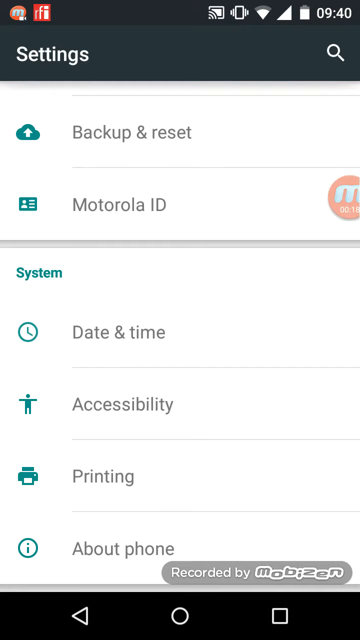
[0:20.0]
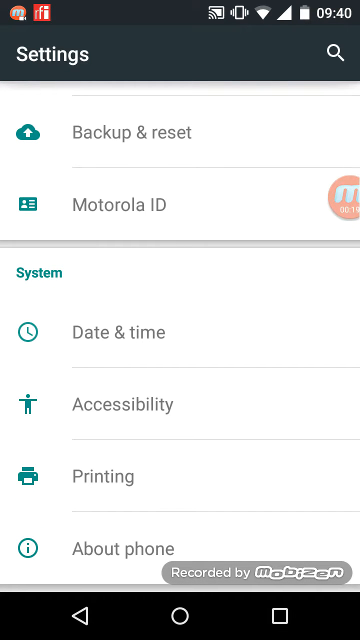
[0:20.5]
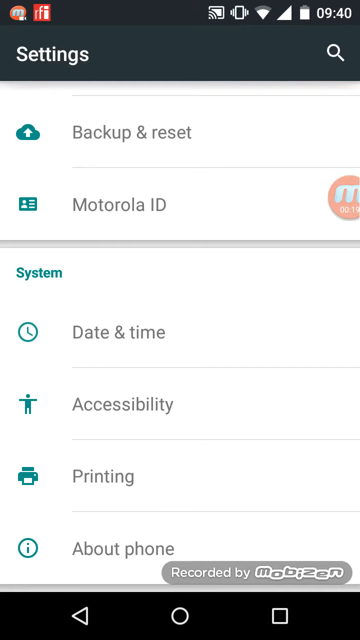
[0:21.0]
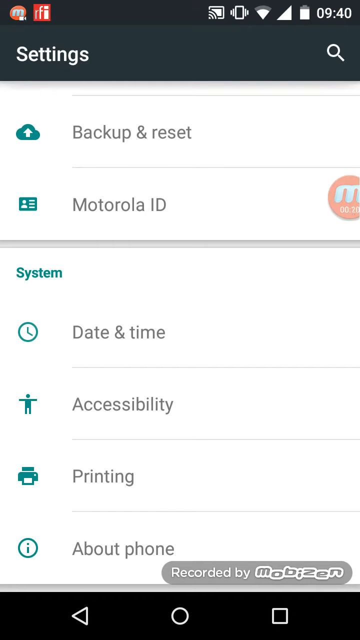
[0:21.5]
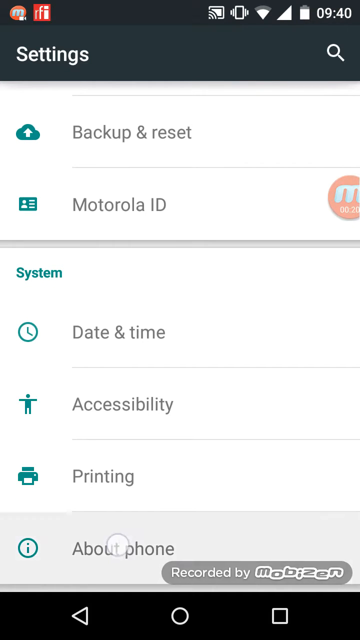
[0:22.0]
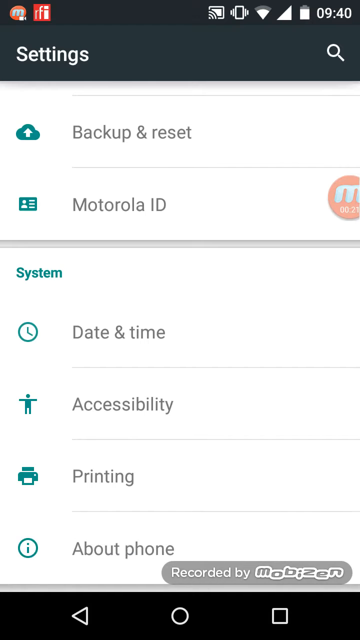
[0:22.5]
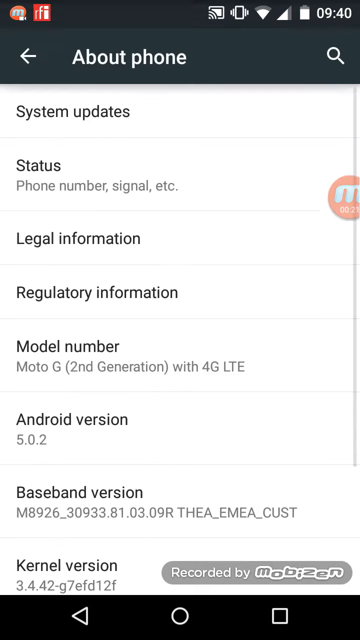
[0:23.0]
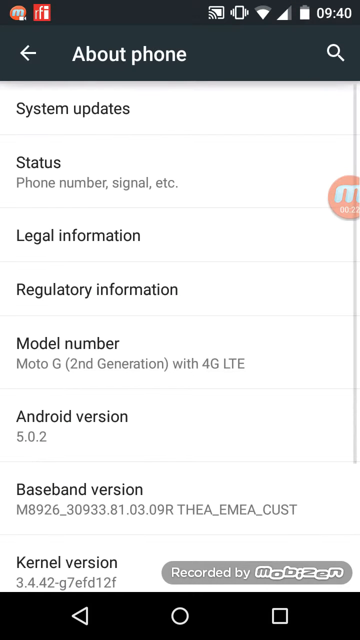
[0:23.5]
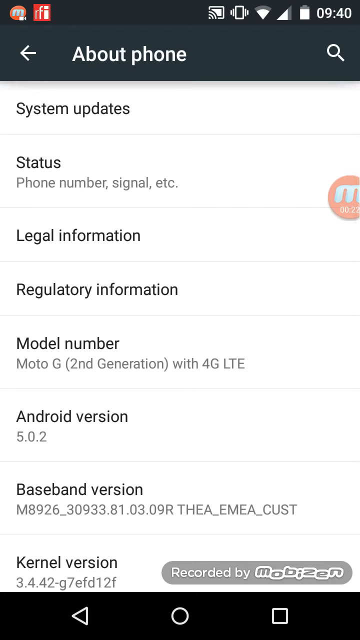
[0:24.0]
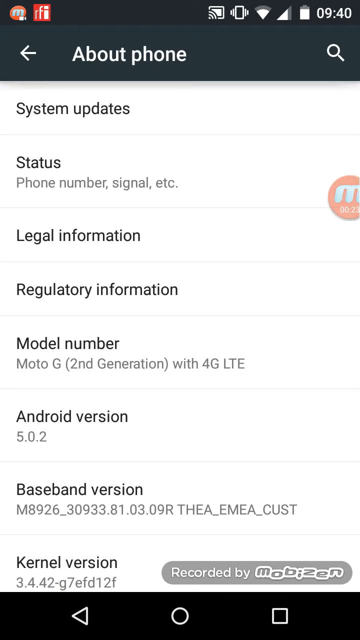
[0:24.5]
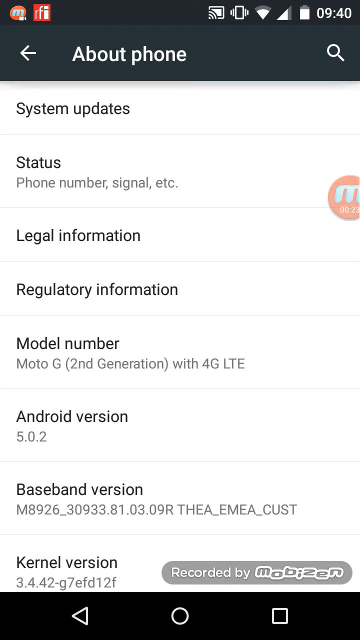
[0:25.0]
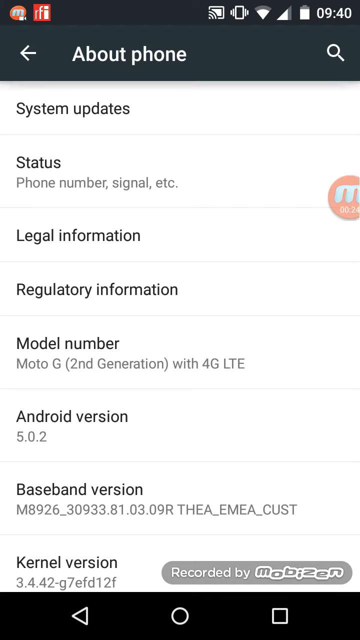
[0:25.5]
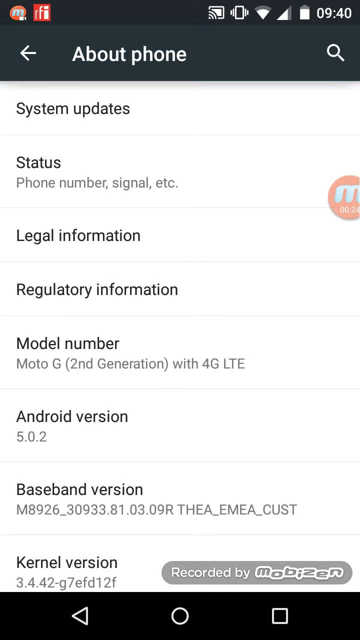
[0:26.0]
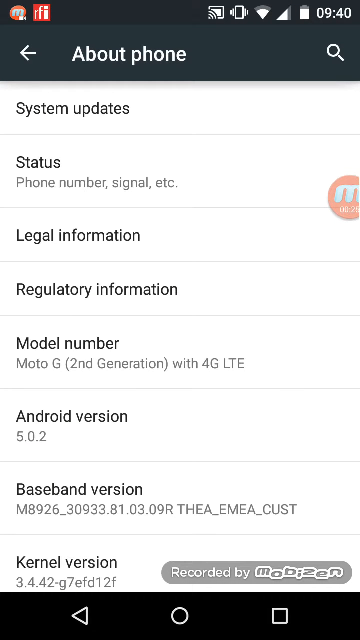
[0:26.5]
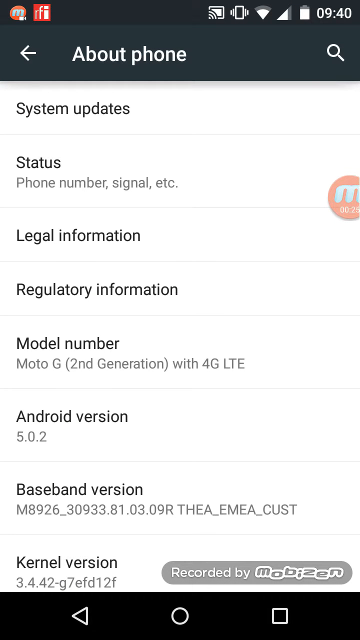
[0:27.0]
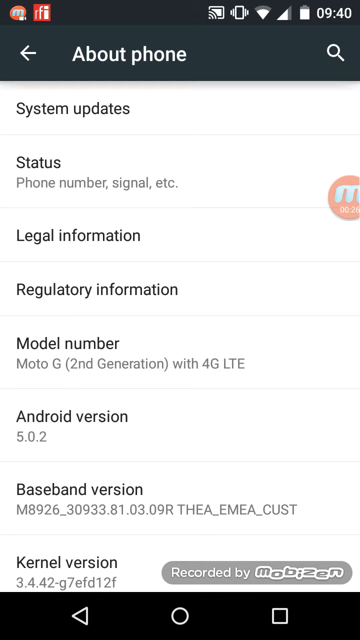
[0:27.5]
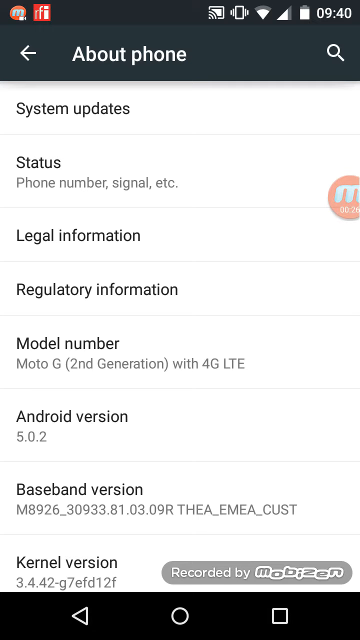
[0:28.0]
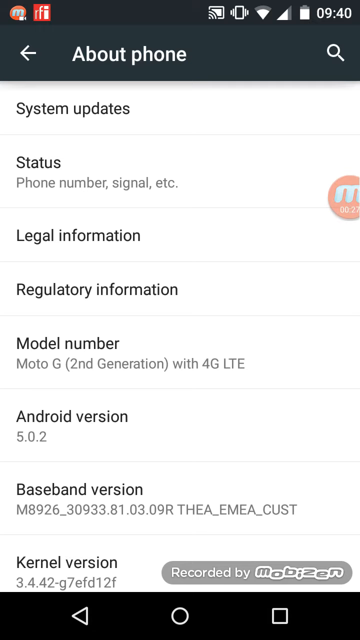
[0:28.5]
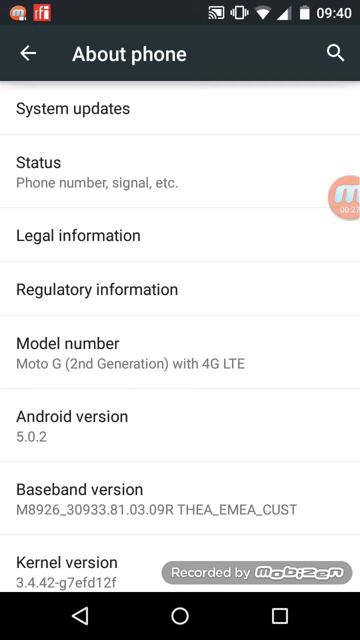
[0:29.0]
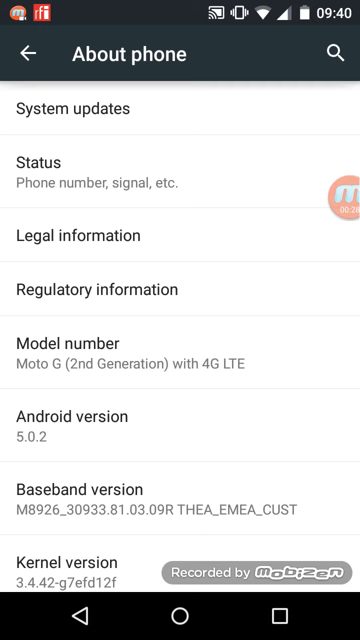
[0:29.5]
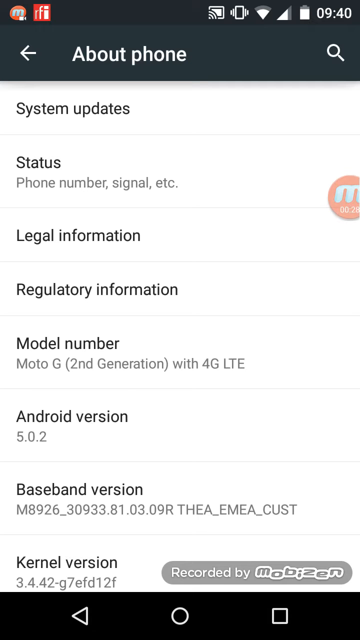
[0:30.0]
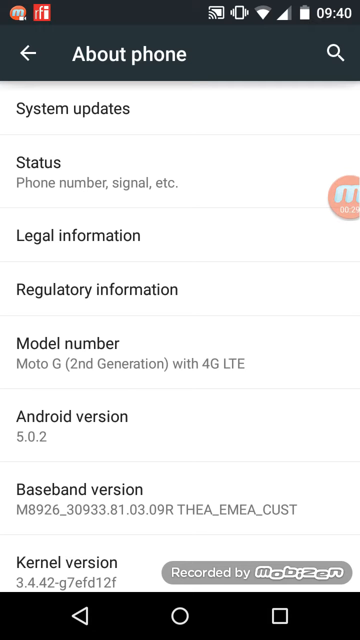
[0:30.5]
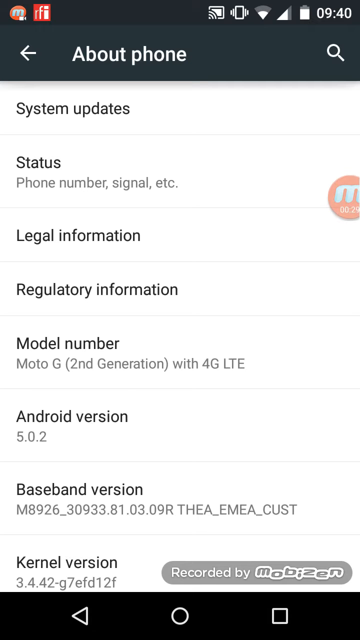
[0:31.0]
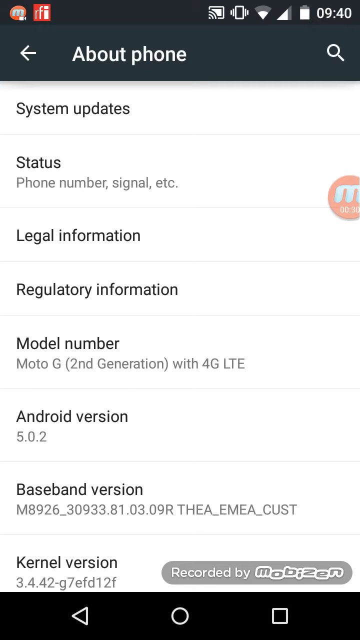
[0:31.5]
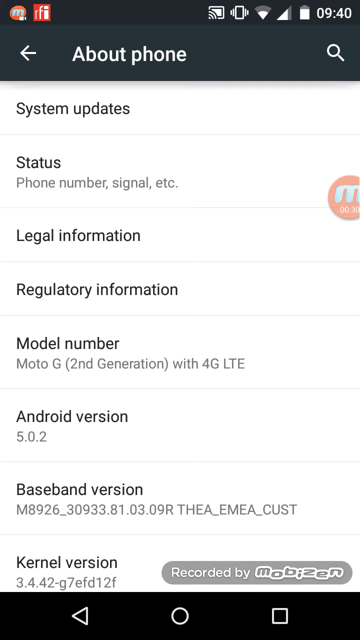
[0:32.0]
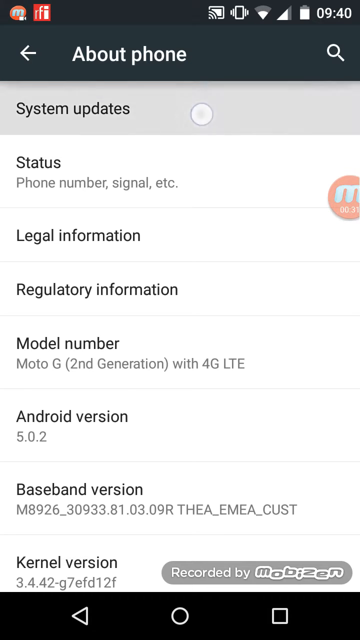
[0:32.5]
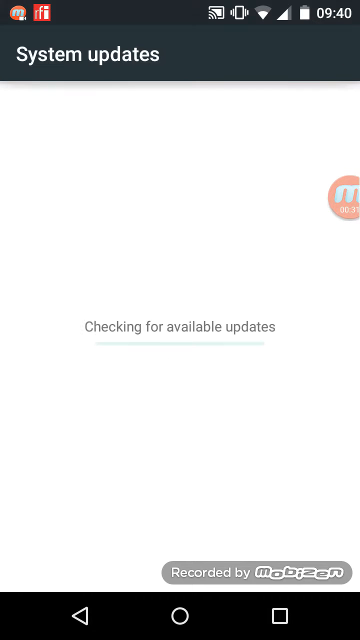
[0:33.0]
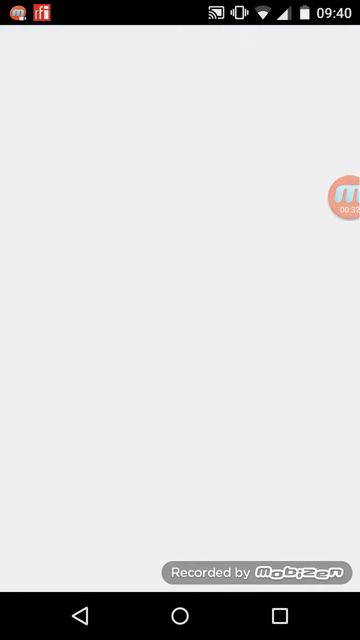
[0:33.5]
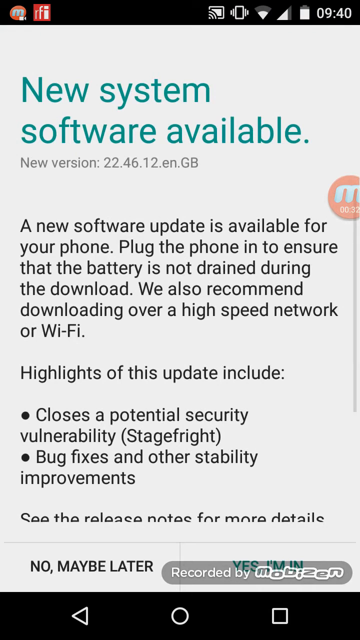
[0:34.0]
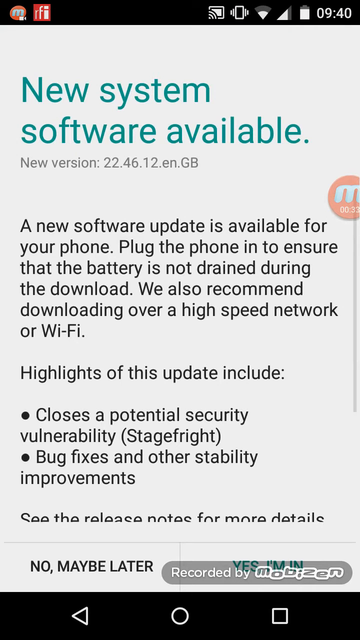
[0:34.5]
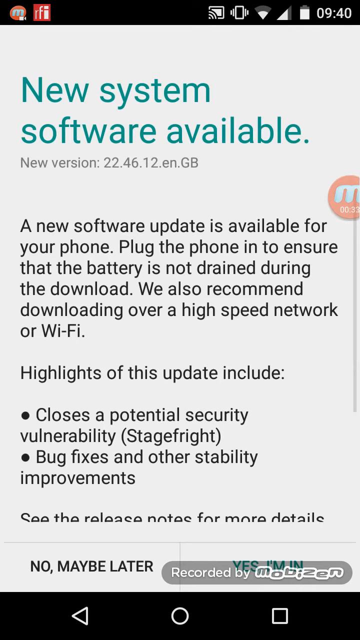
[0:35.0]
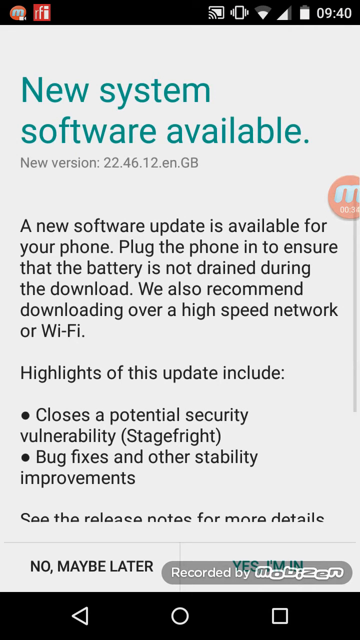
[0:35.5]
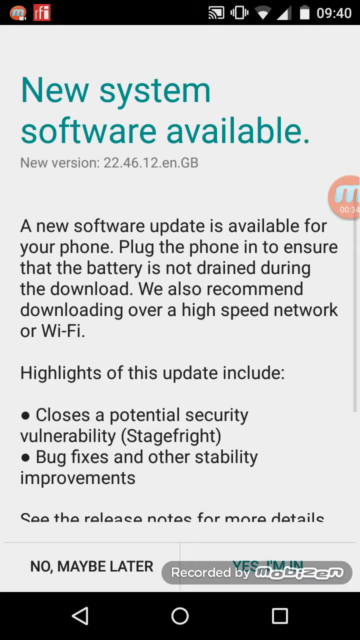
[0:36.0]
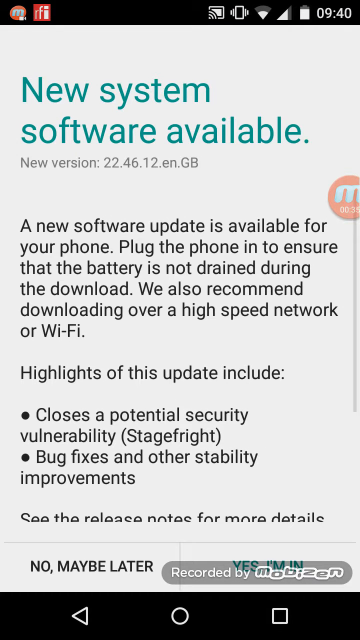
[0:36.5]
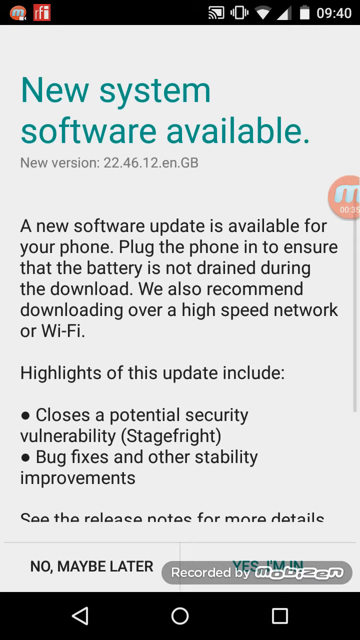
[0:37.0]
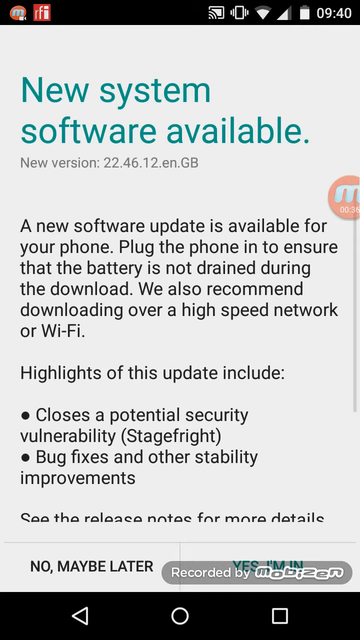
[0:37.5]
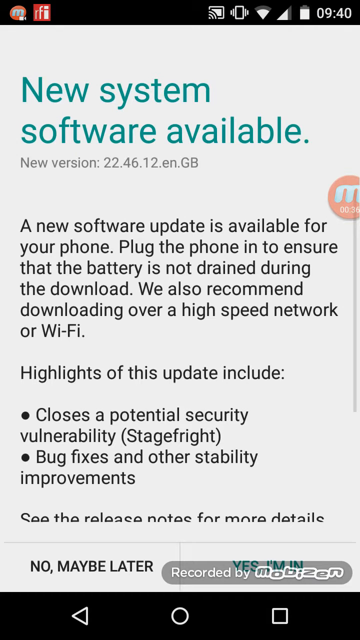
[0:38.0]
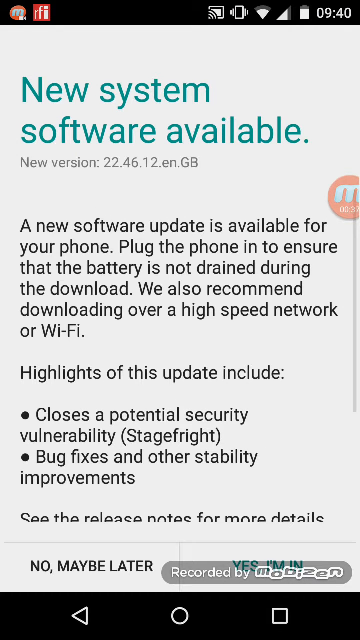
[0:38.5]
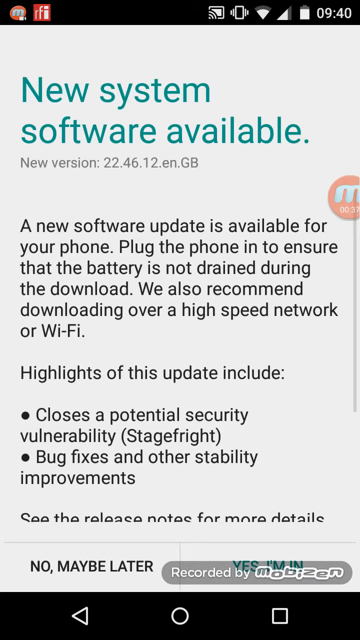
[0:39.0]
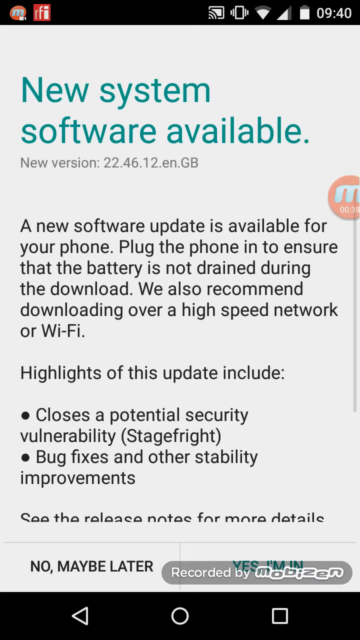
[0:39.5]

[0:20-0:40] Options of the phone are shown, along with system software available for the device that can be downloaded.